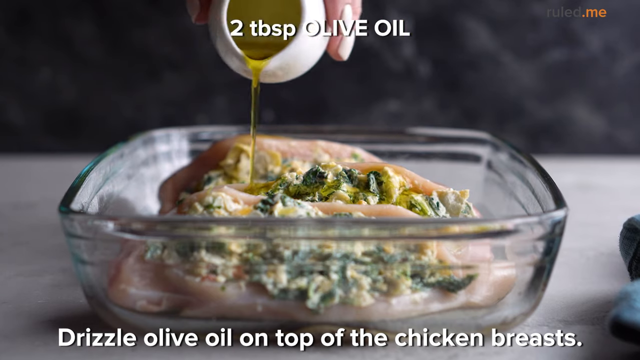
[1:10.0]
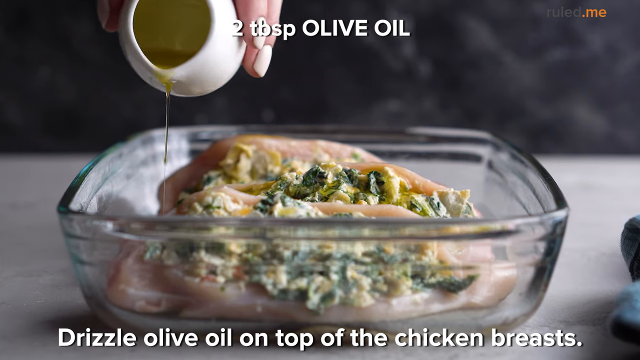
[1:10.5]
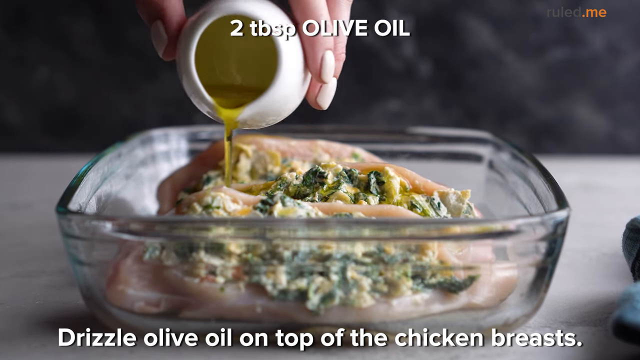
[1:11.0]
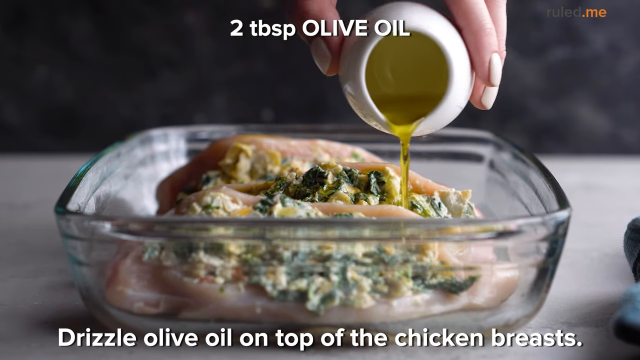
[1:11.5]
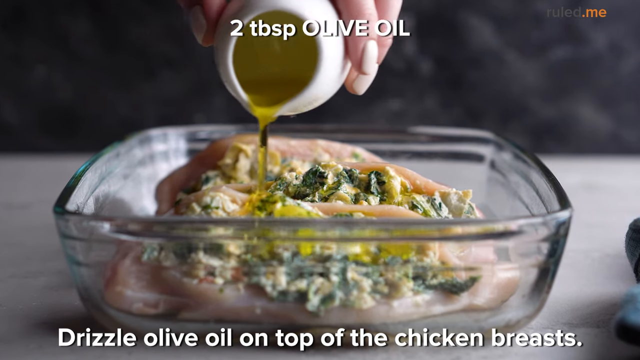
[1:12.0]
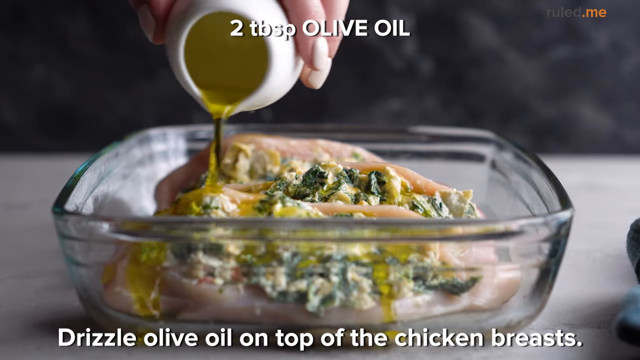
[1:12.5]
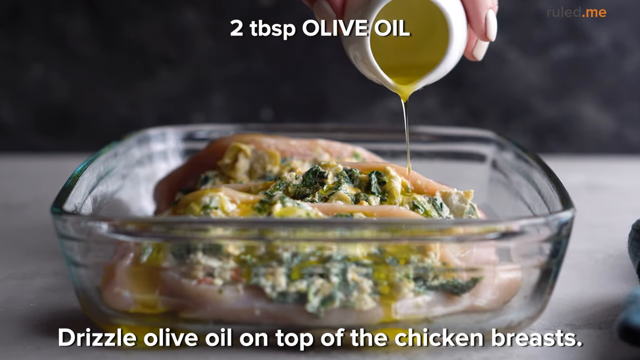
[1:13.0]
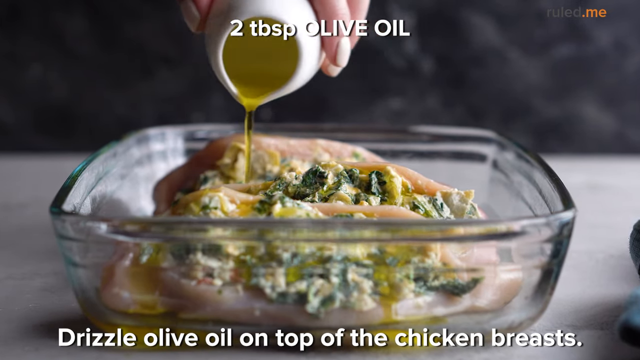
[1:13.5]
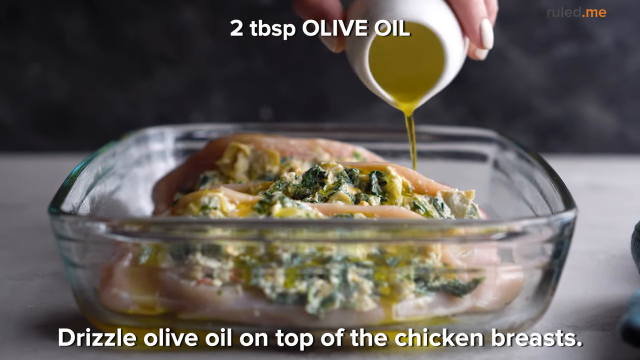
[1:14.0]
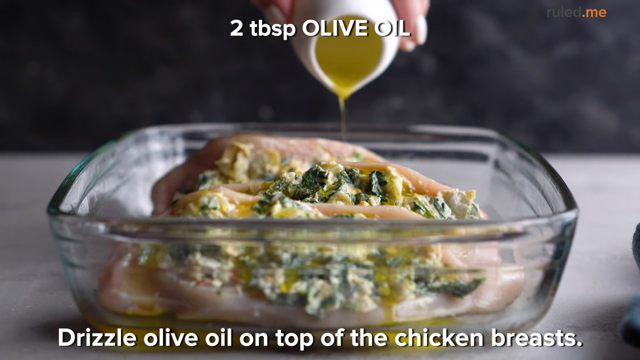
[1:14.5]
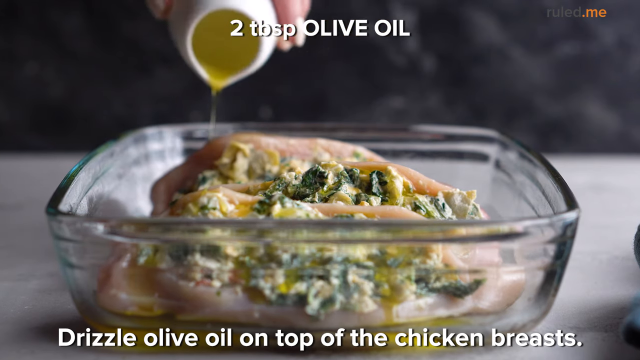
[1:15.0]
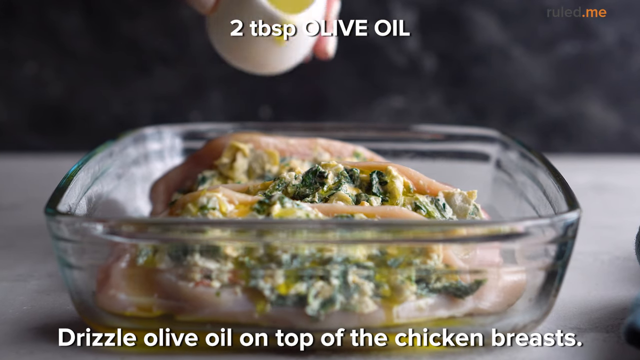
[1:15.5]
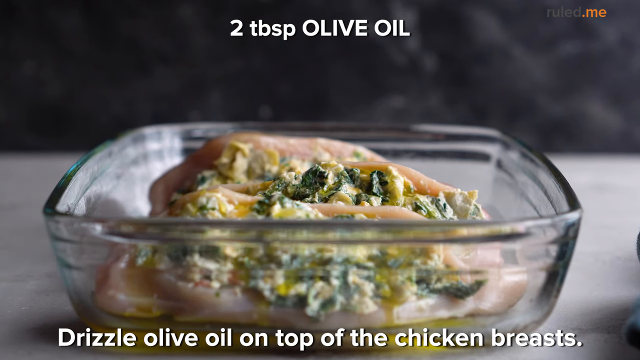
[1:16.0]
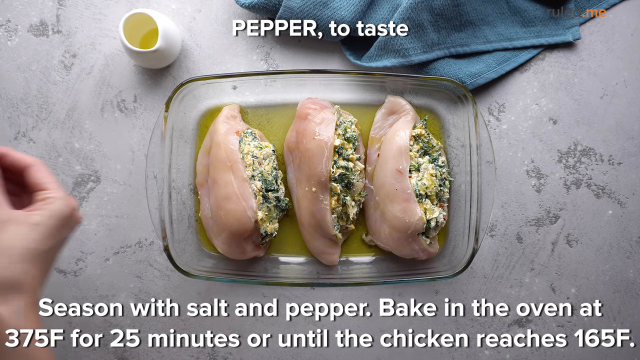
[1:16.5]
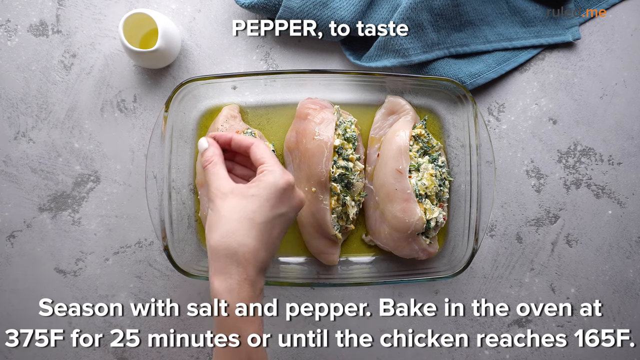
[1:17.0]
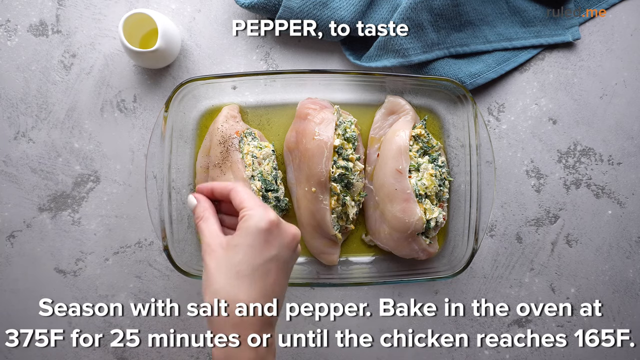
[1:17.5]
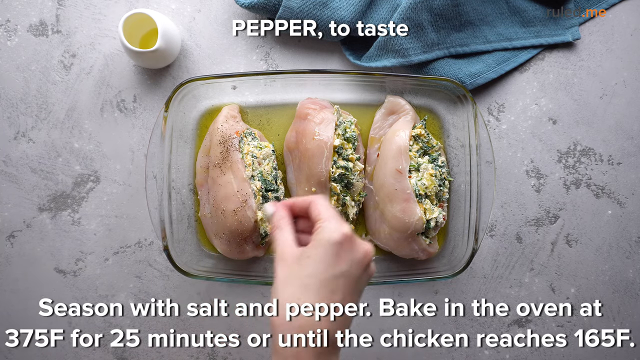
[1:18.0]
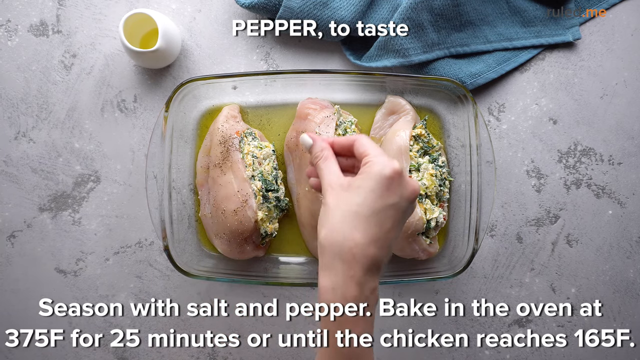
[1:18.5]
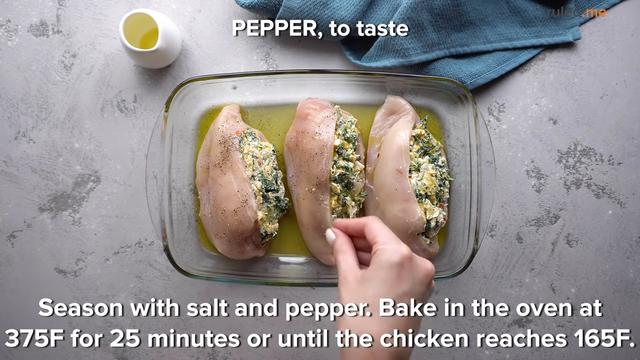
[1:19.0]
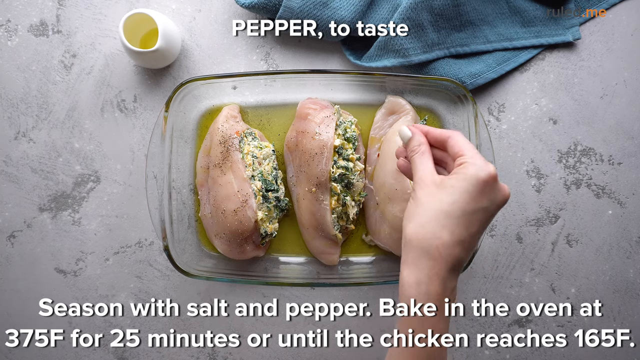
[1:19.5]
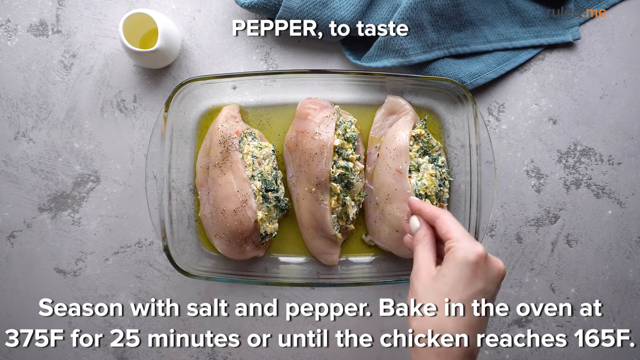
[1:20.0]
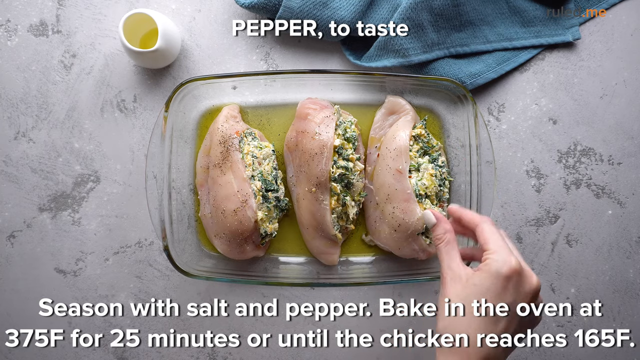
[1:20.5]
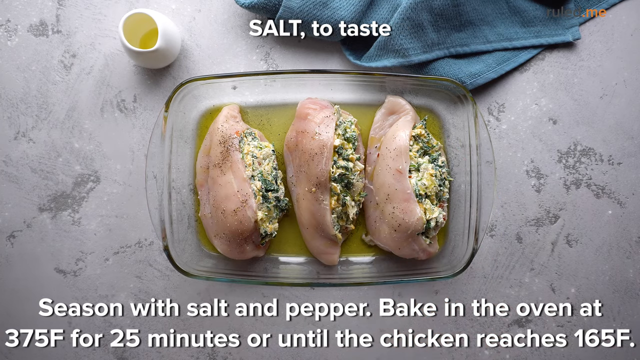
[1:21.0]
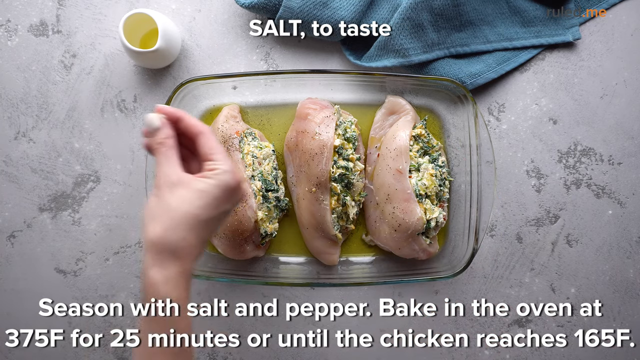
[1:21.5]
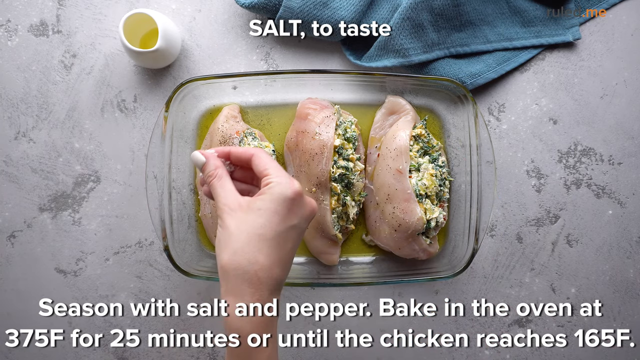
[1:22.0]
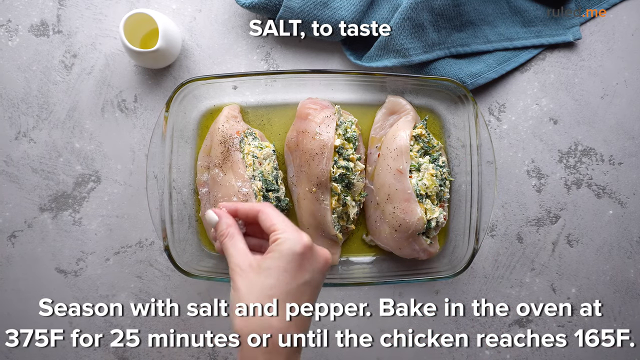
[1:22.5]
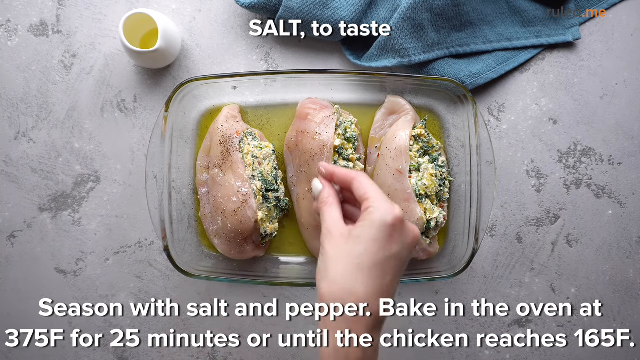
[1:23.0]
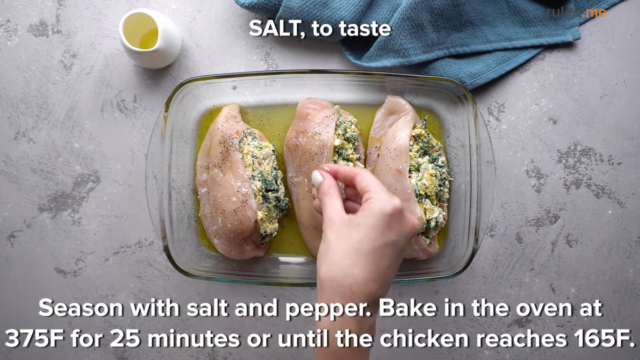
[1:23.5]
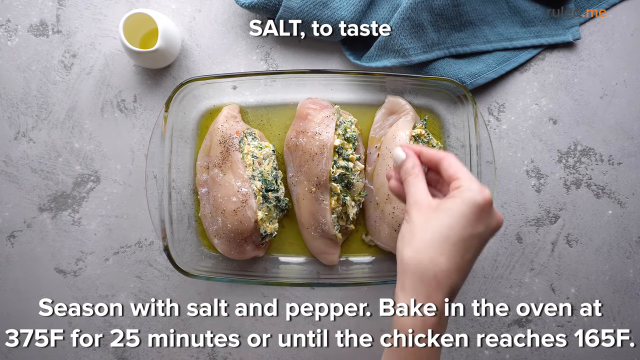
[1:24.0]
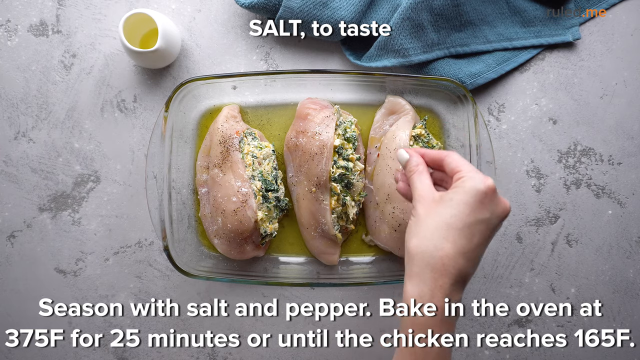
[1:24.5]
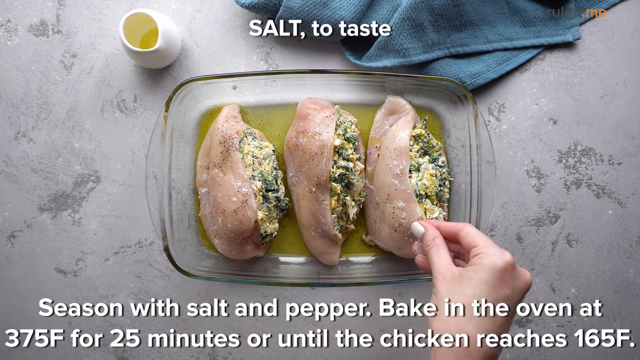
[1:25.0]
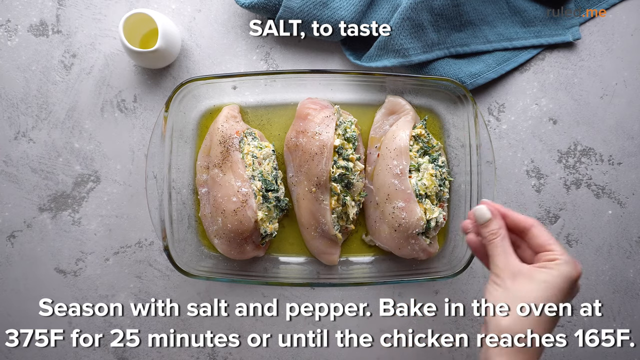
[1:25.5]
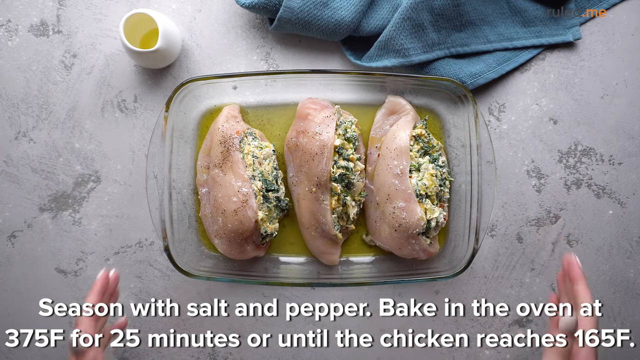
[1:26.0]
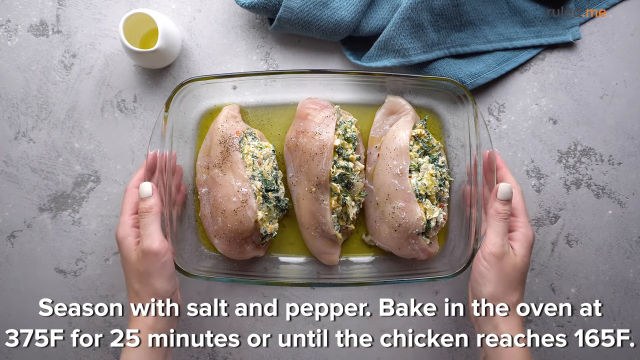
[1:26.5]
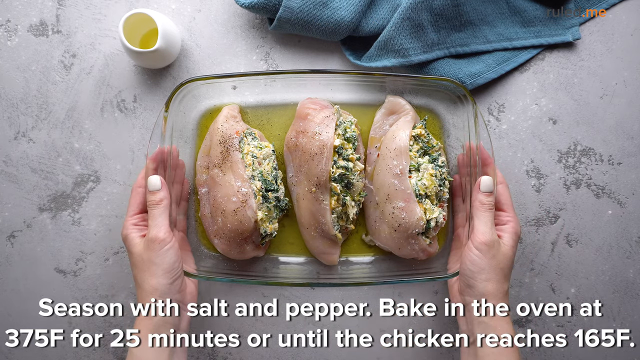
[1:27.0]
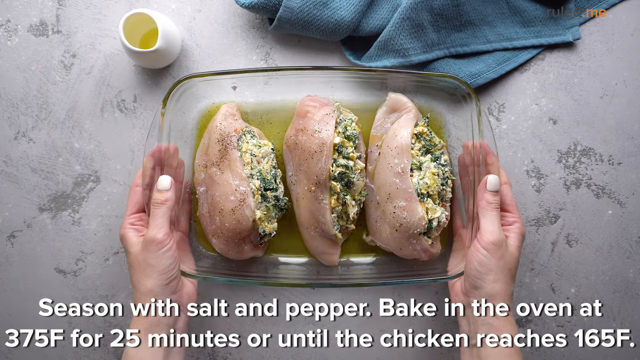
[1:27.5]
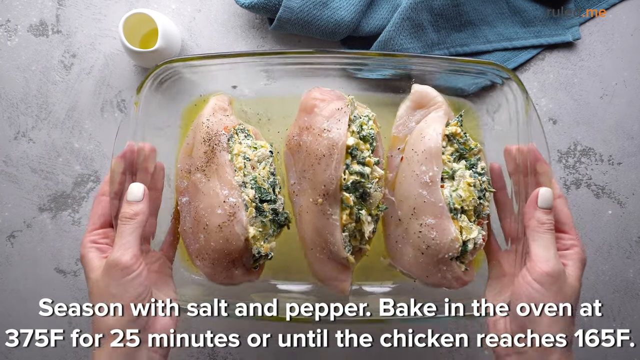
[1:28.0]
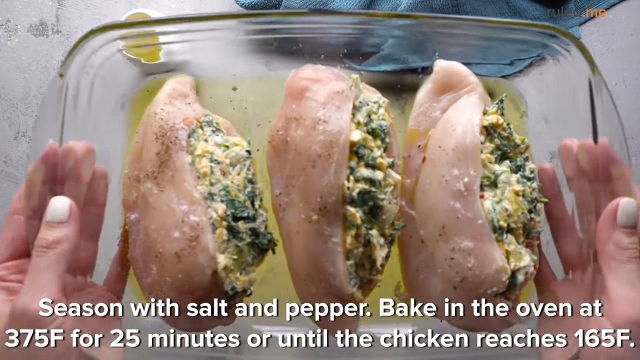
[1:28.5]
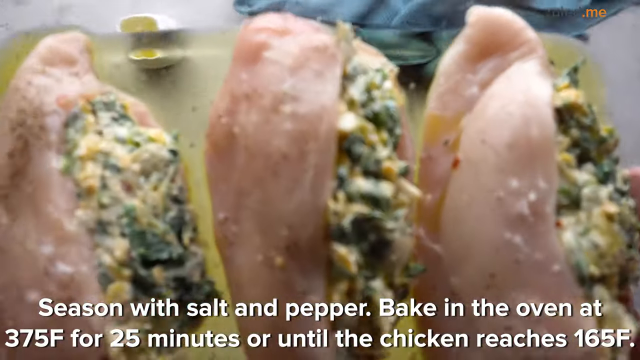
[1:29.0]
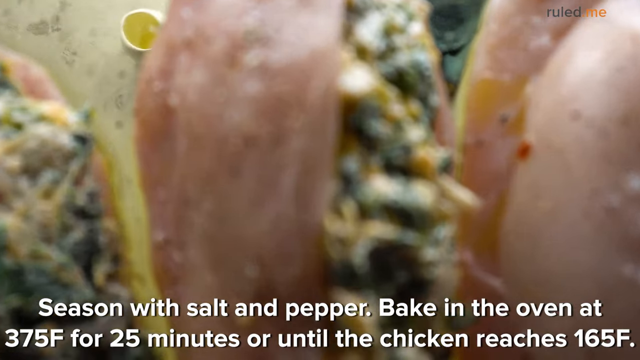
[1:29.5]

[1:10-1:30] Stuffed chicken breasts are in a clear glass pan. Someone pours two tablespoons of oil over the chicken, with the exact amount of olive oil shown at the top of the screen, then sprinkles pepper and salt by hand, adding pinches up and down the chicken breasts, with the words "to taste" shown above. The pan is picked up and brought close to the camera, and the camera zooms in on the stuffing and the raw chicken. Afterward, a little container of oil is to the left of the glass pan, and the blue dish rag remains on the gray surface with stone-like or marble-like patterns. The title of the dish is not shown.